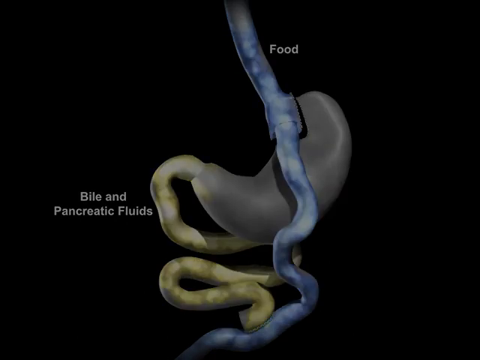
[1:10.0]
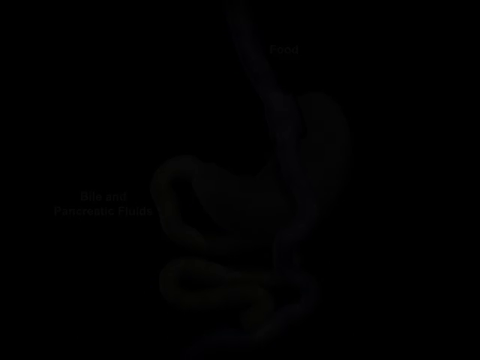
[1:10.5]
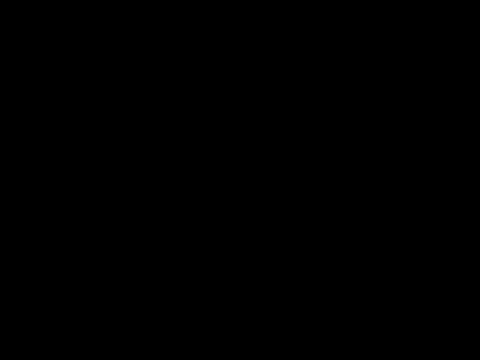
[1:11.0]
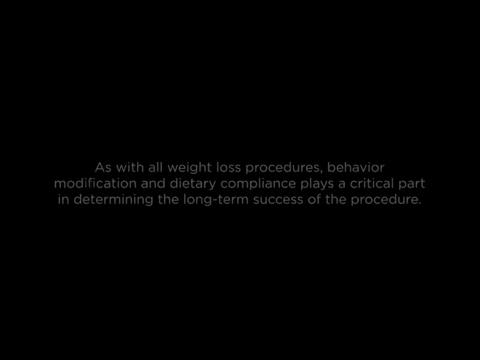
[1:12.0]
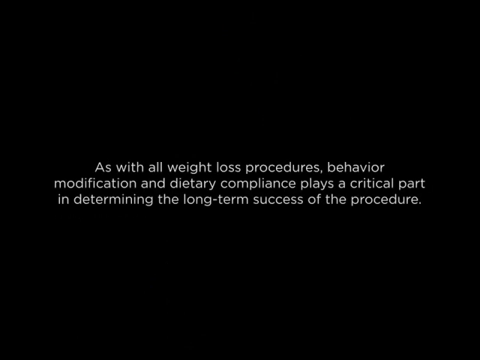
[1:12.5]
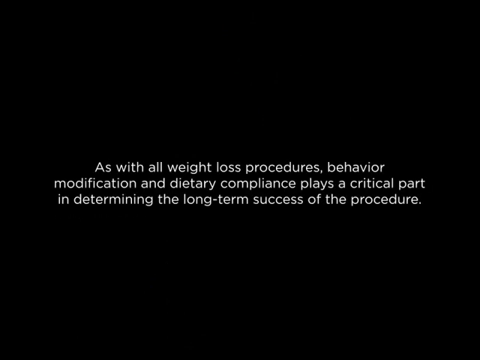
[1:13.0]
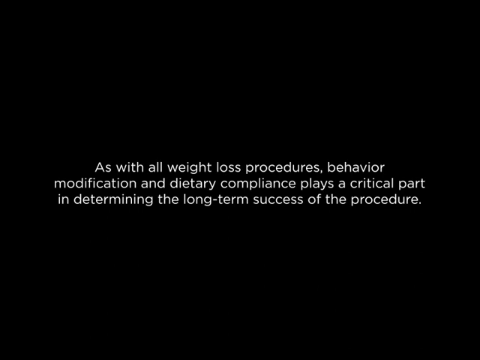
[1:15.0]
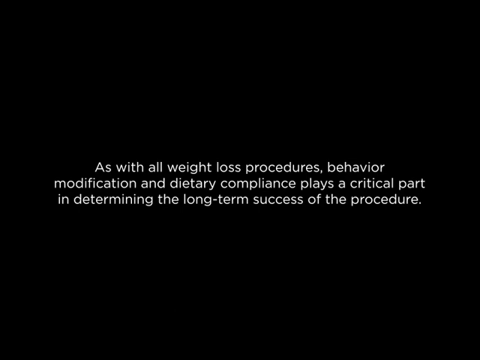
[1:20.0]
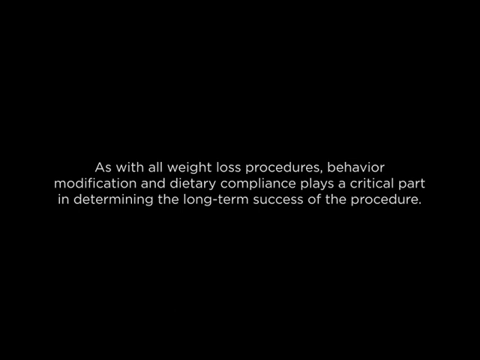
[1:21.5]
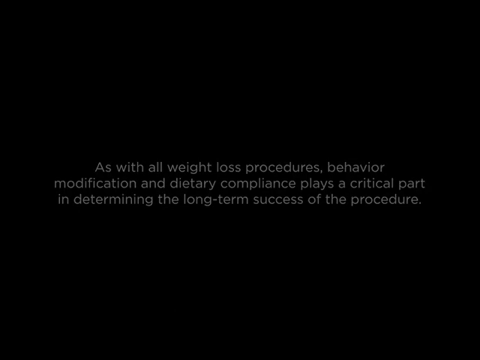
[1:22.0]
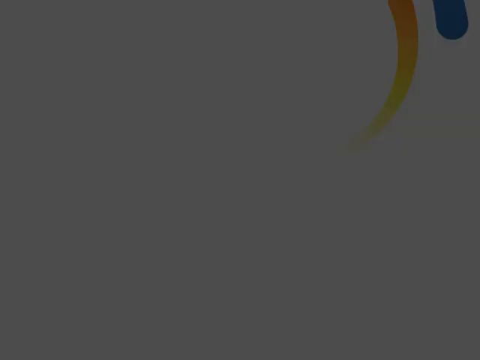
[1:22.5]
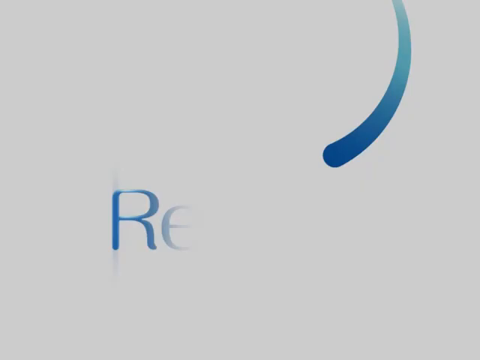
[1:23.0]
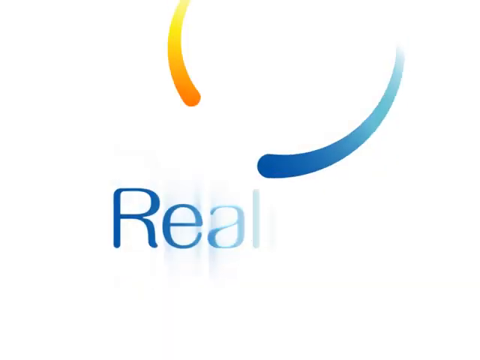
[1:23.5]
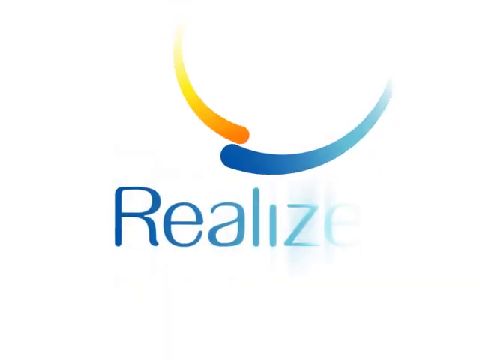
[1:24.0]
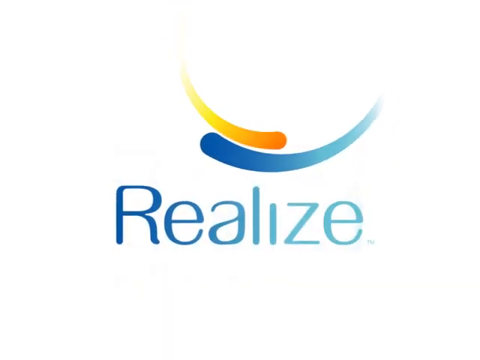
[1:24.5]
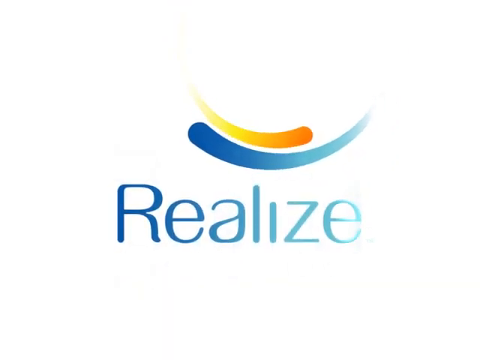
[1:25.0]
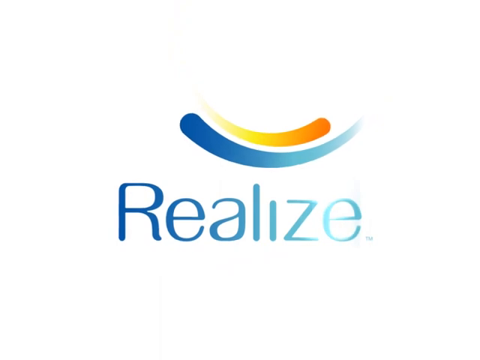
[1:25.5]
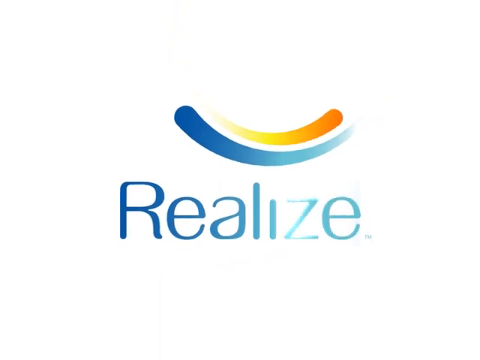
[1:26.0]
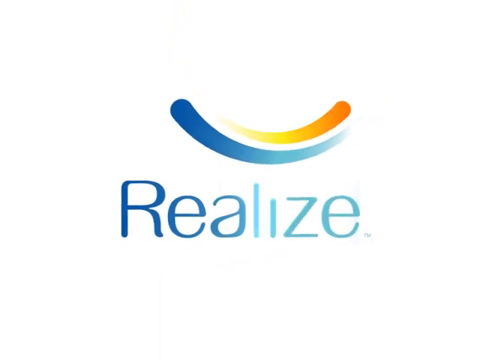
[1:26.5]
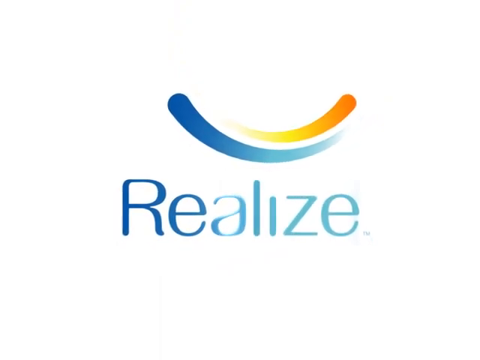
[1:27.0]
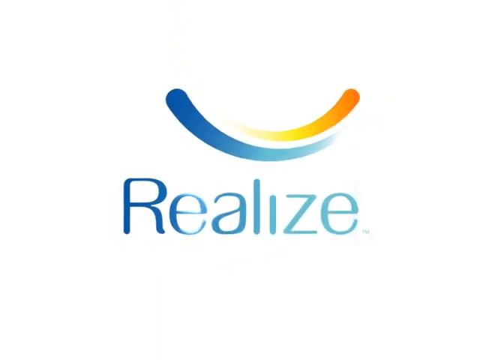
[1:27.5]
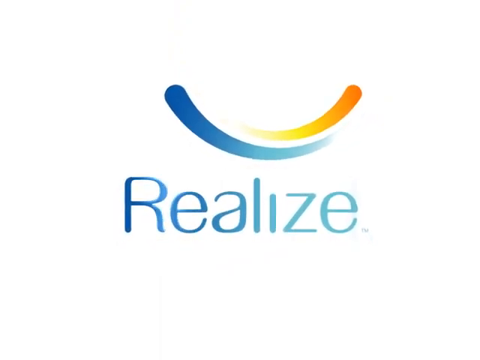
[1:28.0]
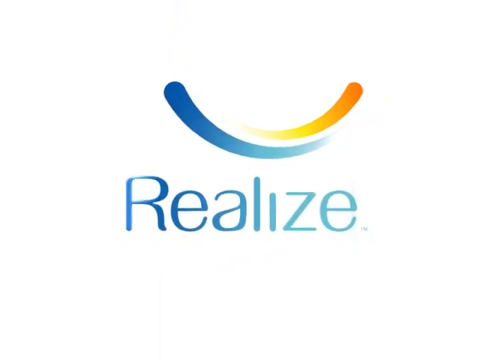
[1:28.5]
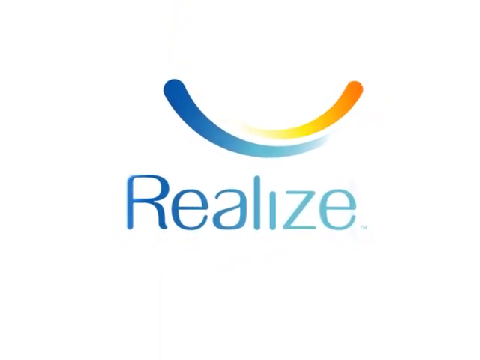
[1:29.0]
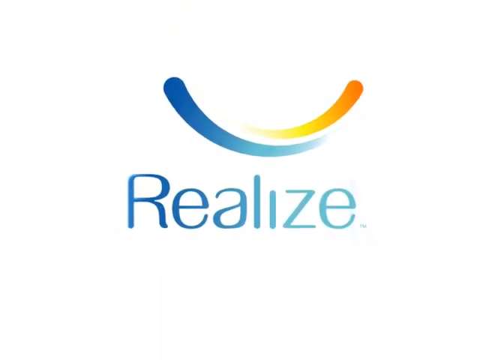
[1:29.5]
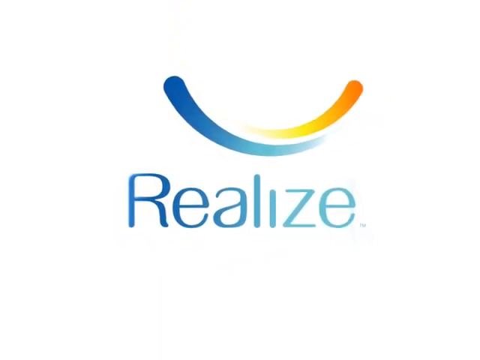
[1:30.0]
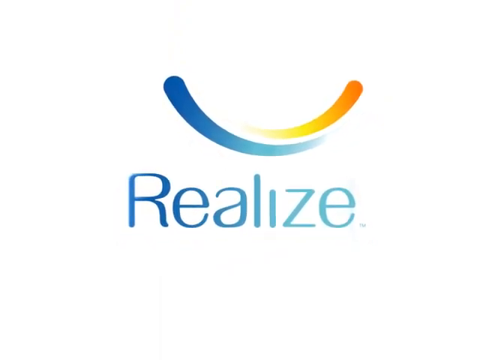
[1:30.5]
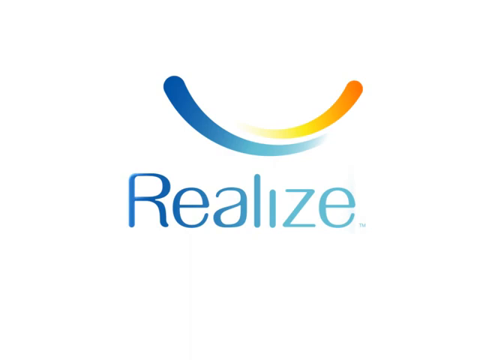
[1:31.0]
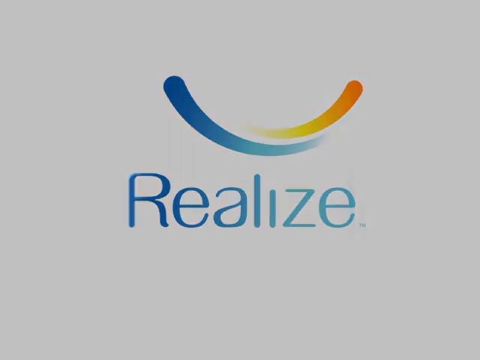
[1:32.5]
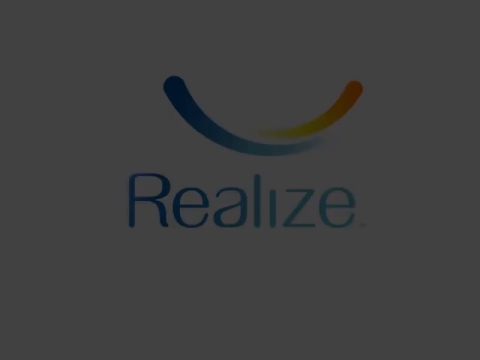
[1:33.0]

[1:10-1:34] The stomach, intestines and esophagus are shown in front of a black background. A blue substance leads down the esophagus, through the portion of the stomach below it that is separated from the rest of the stomach, and into a portion of the small intestines connected to the bottom of that separated portion. On the right, at the bottom of the stomach, an area of the small intestines loops around as it goes down; it has a yellow substance inside and is labeled "bowel and pancreatic fluids". The fluid flows down. Then, in white on a black background in the center of the screen, are the words "as with all weight loss procedures, behavior modification and dietary compliance plays a crucial part in determining the long-term success of the procedure". The scene then flips to a white background where an orangish-yellow circular-shaped object enters from the top left and a blue object enters from the right corner, moving toward the left. They travel until they are one on top of the other, the blue one at the bottom, with the word "Realize" written in blue below them. They continue to flow toward the left and the right, and the scene pans out a bit.